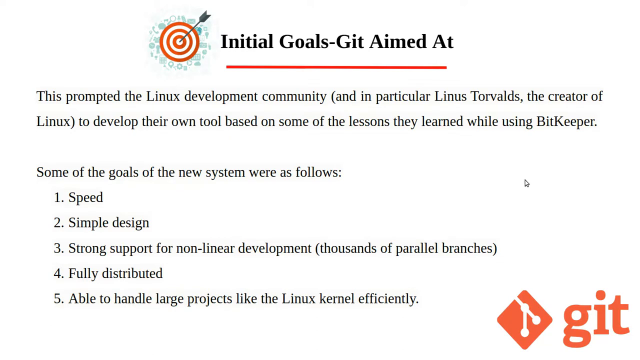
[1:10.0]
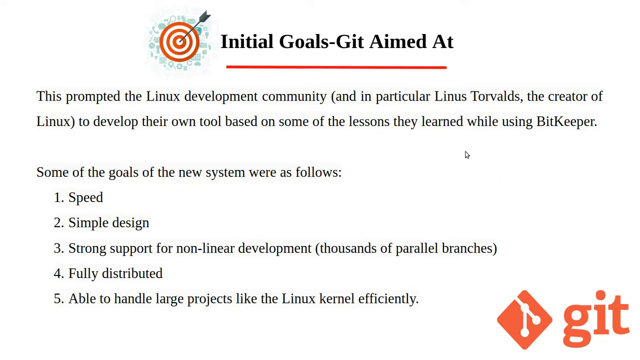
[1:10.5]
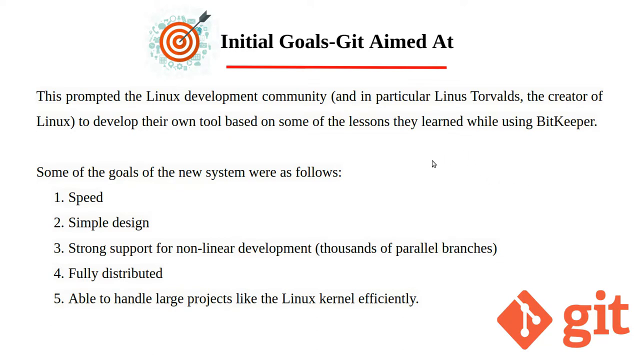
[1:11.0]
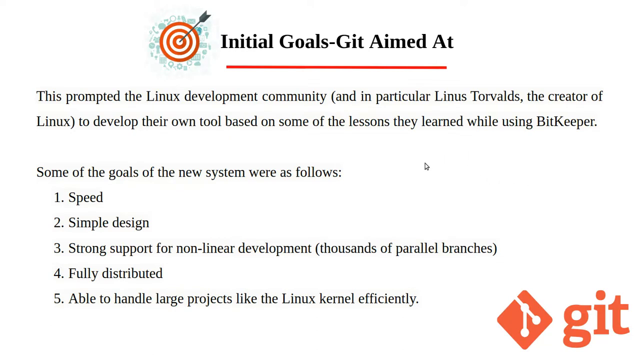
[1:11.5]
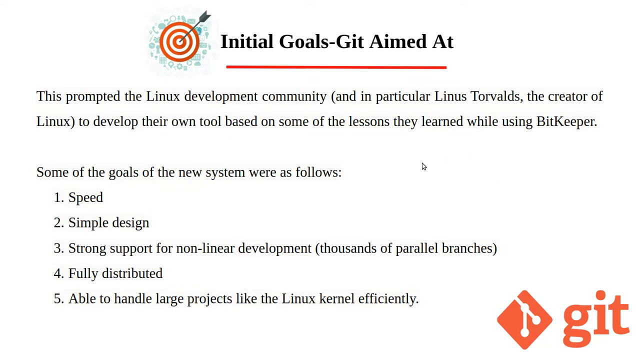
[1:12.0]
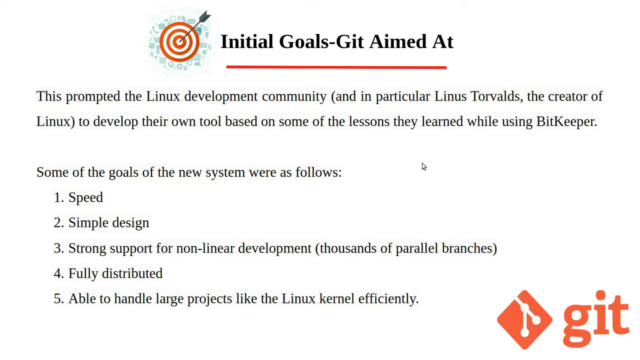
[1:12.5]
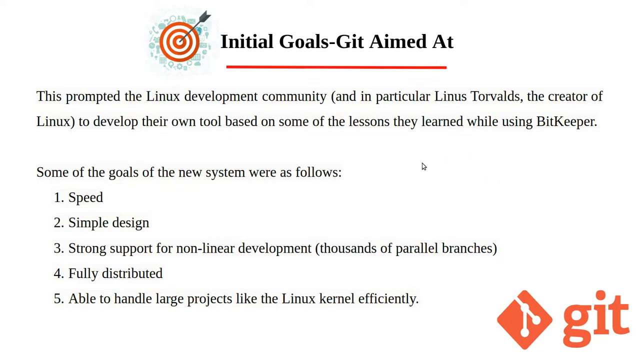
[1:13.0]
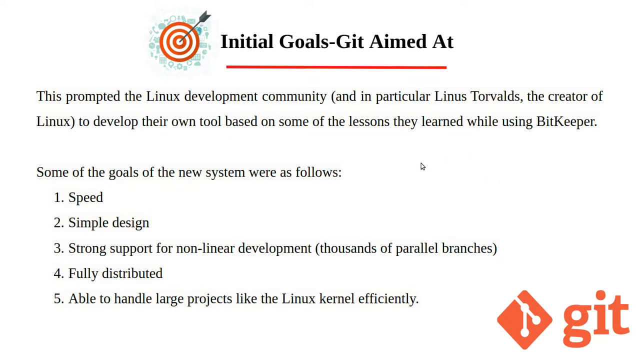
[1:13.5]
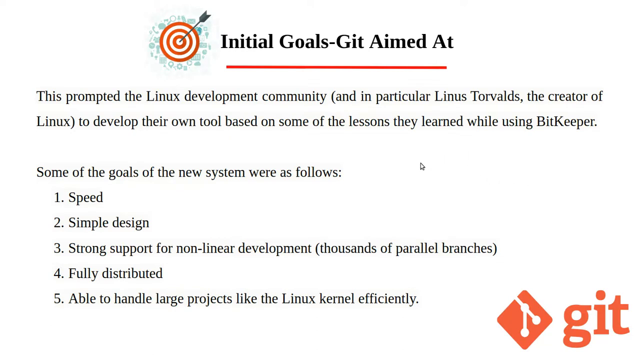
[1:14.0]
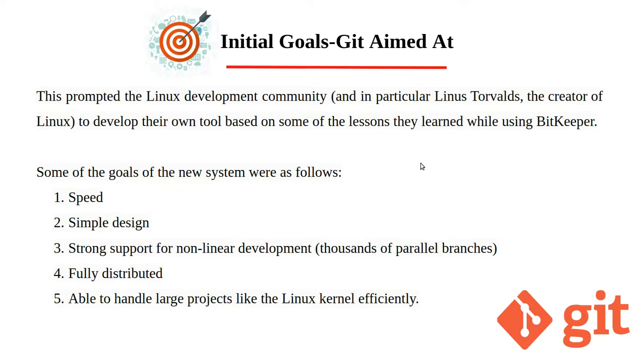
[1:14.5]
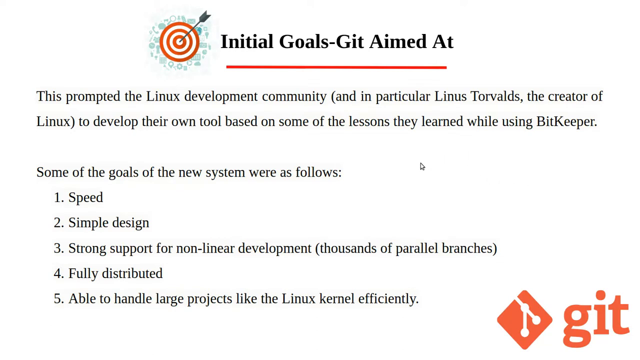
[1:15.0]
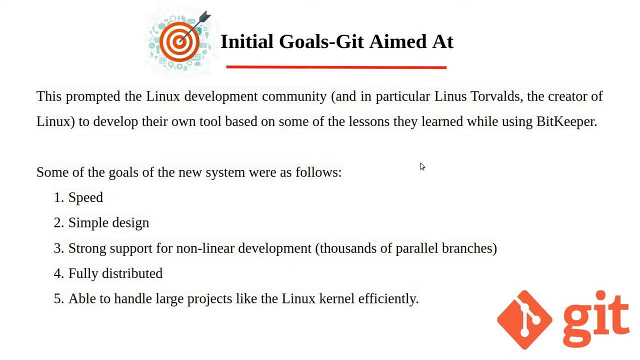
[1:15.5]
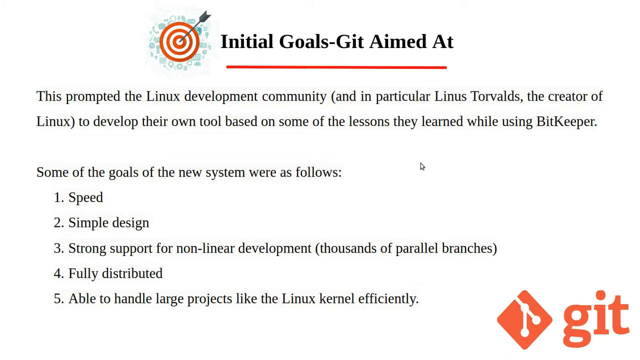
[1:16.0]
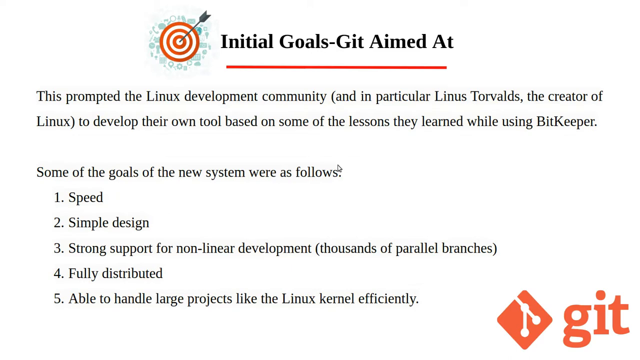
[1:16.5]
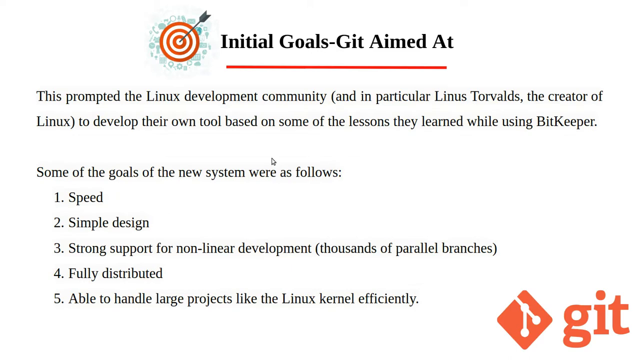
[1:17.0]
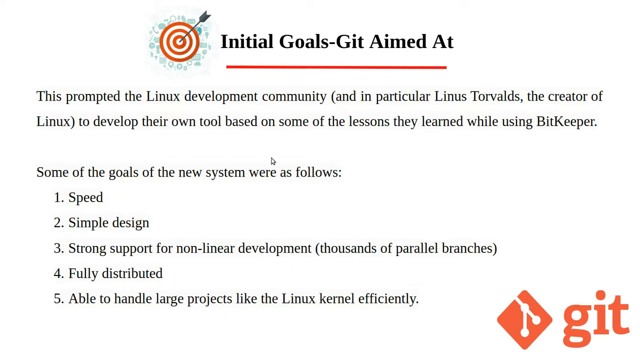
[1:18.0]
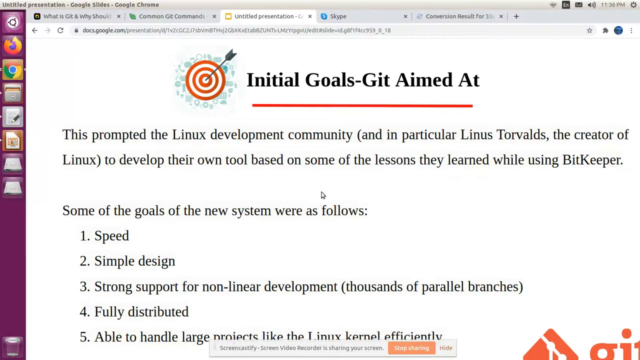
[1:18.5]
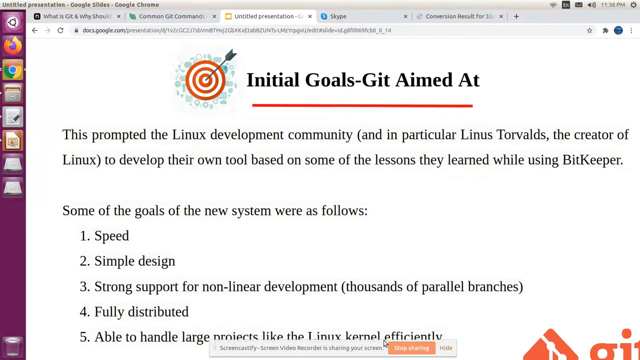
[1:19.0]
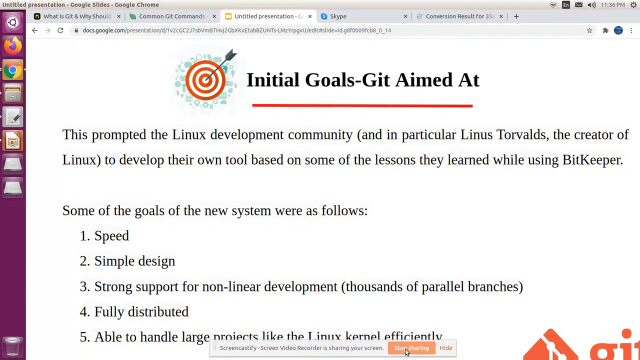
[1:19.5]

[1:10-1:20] The video covers the initial goal of Git: after the relationship with BitKeeper ended, the Linux development community developed its own tool based on lessons learned while using BitKeeper. The goals of the new system are listed as speed, a simple design, strong support for non-linear development, and a fully distributed system able to handle large projects like the Linux kernel efficiently. The video is a shared screen, and after the illustration finishes, the screen sharing stops.